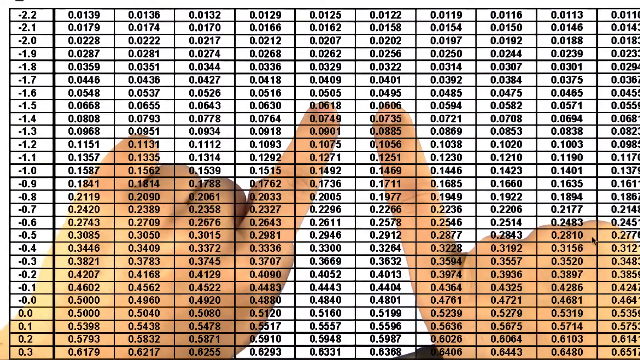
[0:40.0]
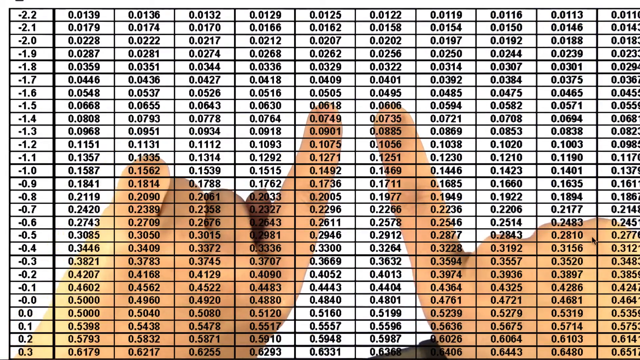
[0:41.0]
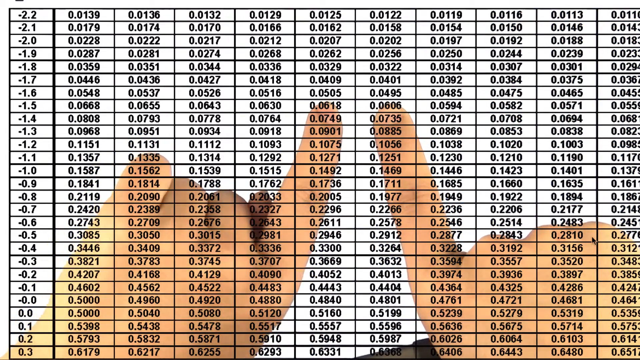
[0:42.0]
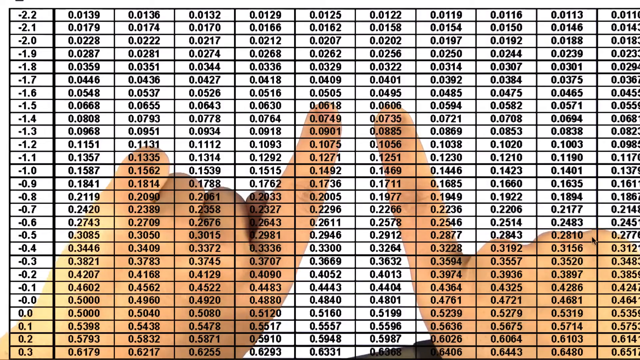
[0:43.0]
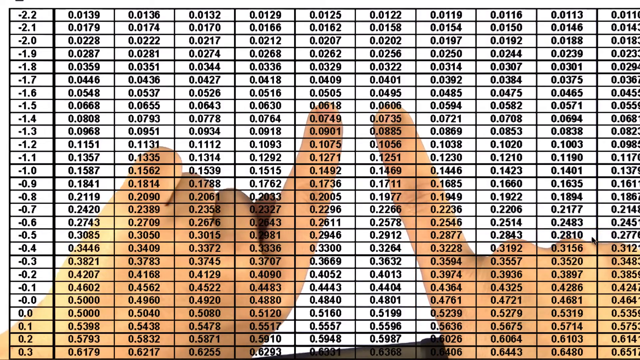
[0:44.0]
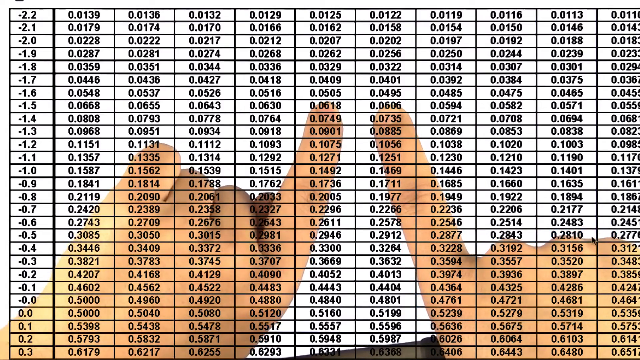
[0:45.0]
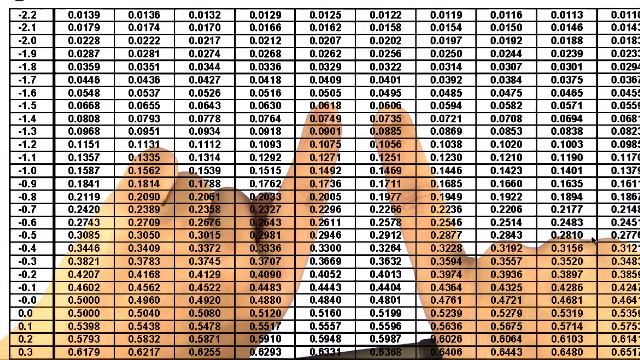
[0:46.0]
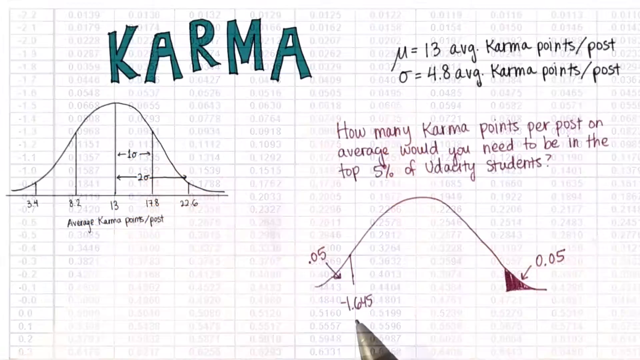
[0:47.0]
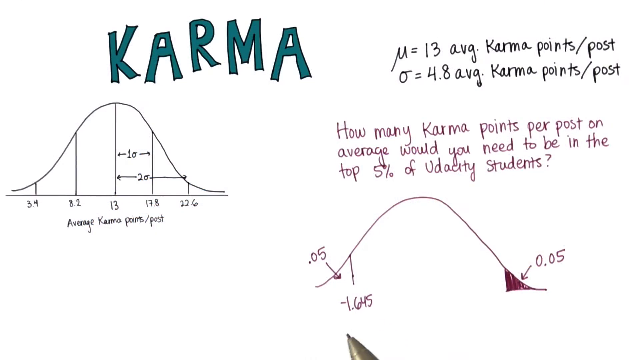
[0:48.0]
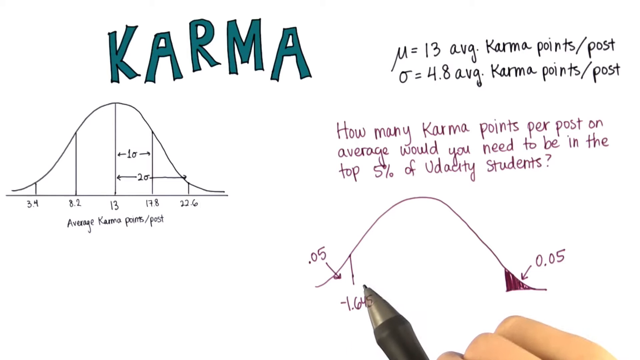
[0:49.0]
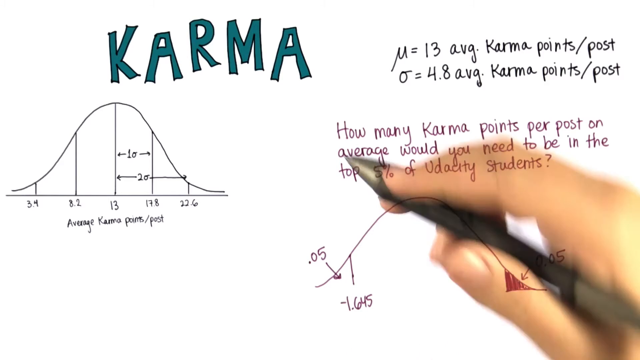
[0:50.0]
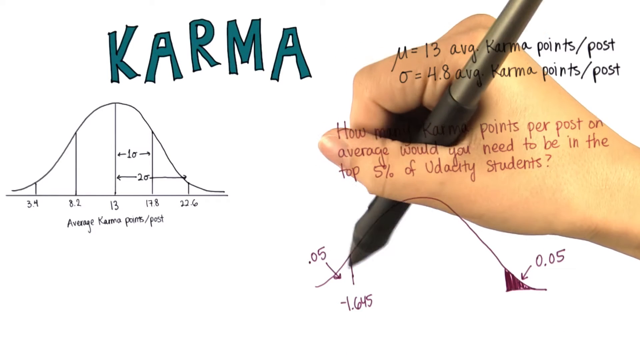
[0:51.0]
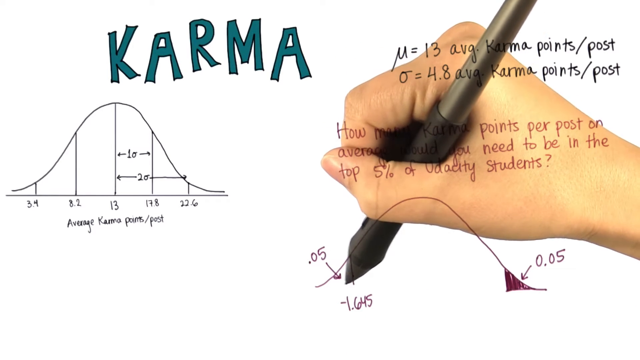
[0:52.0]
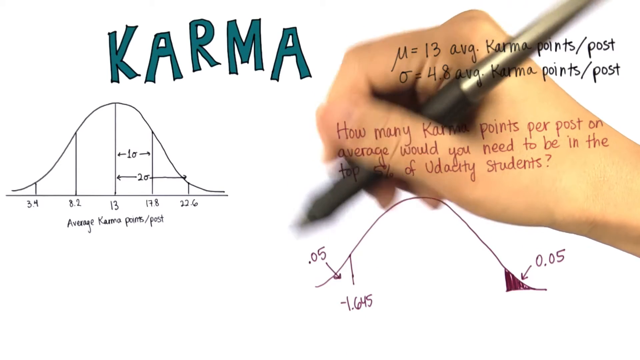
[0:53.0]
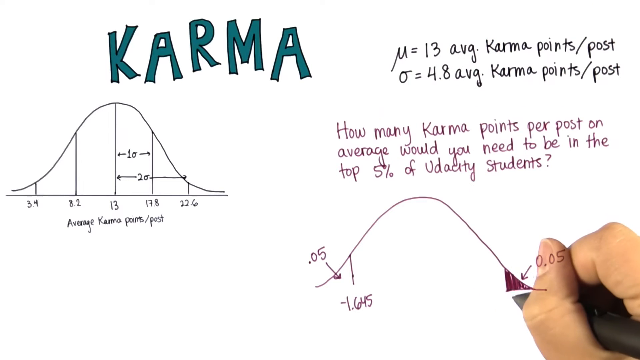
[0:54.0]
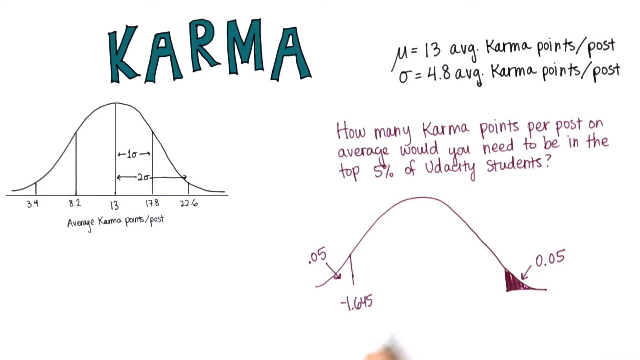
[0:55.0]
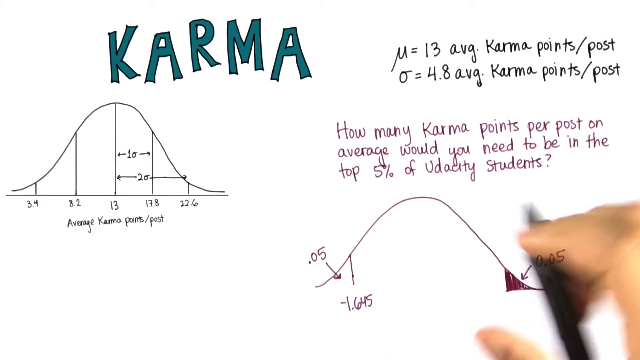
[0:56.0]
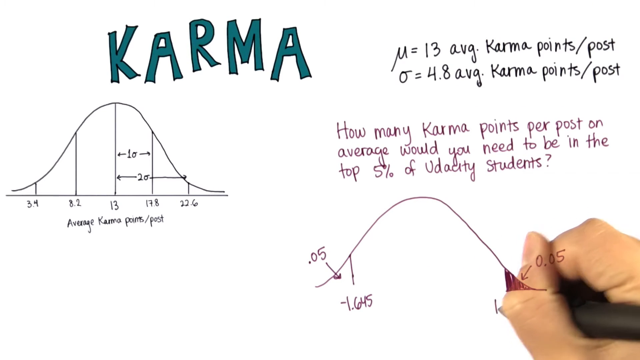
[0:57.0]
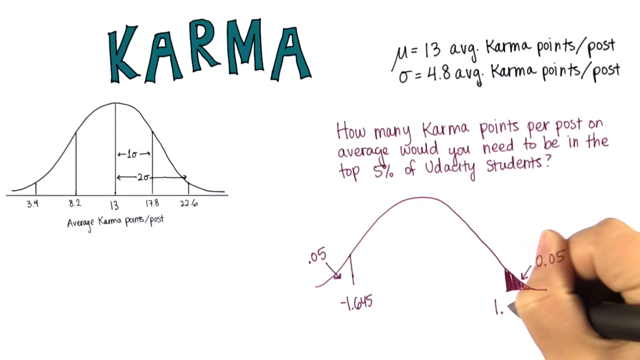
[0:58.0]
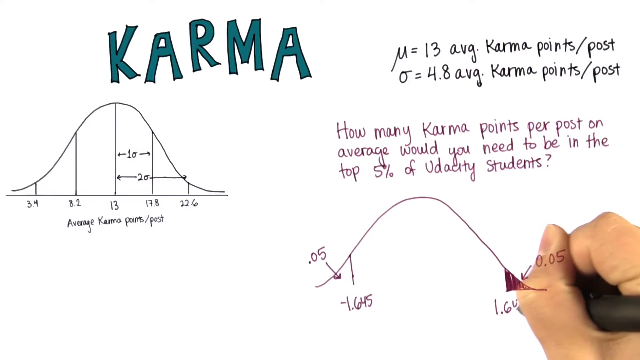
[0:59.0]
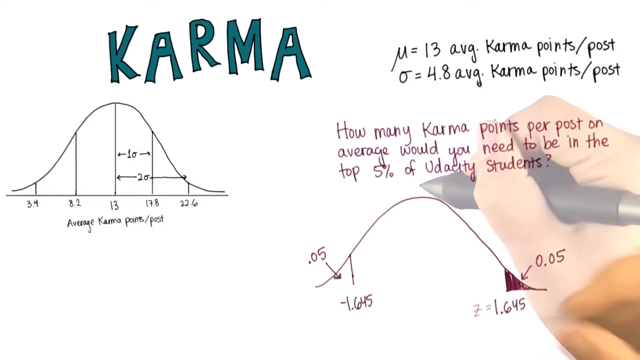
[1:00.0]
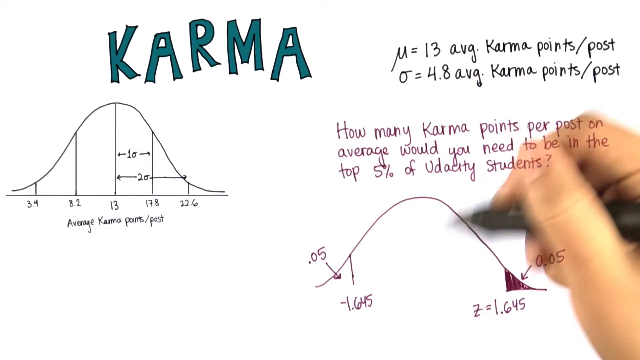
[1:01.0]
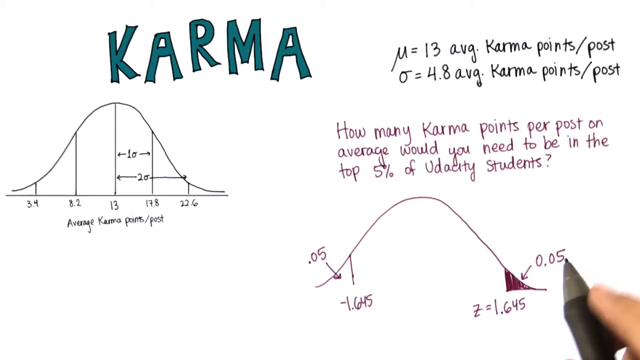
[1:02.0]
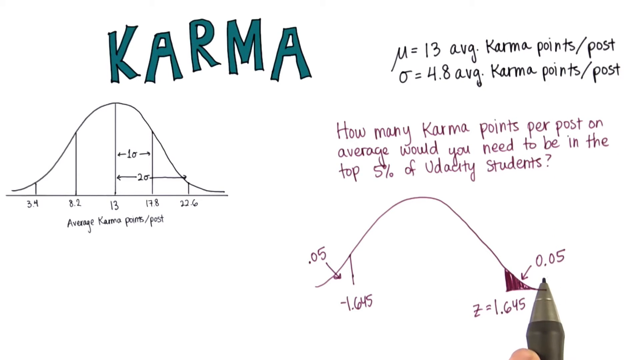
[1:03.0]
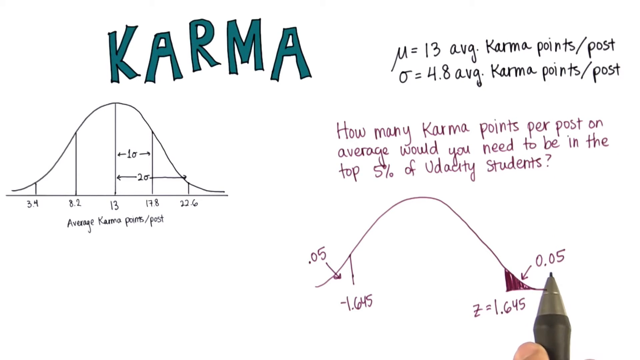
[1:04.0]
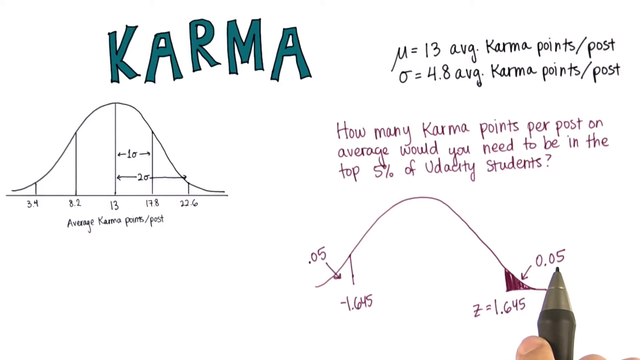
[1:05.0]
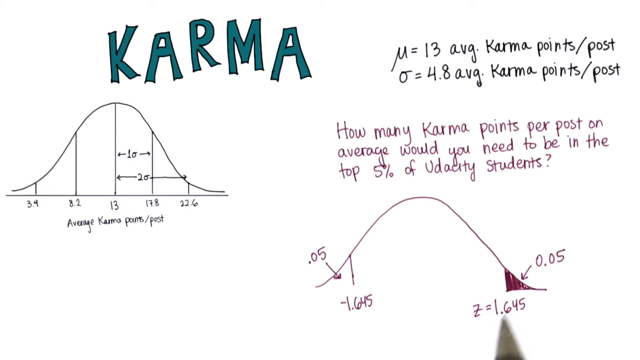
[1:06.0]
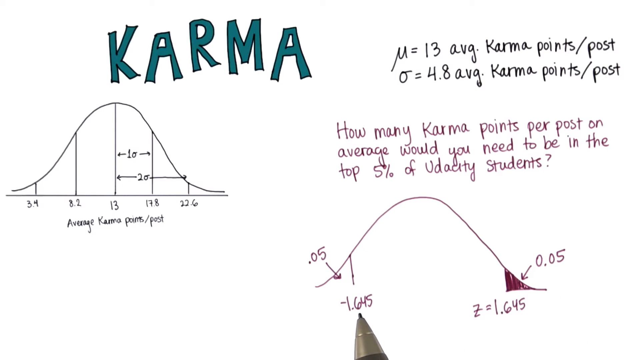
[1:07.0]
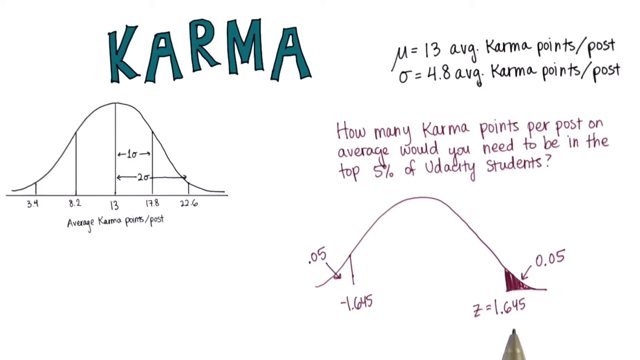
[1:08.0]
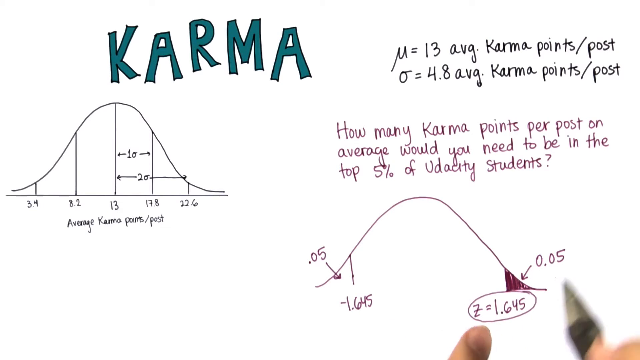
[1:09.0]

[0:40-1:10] The man shows a table with many numbers in it, for example from minus 2.2 to 0.2, with numbers going from 0.0139 to 0.614. He points both index fingers, from his left and right hands, at the middle. Next, another screen titled "karma" appears, showing average karma per post from 3.4 to 22.6, U equals 13 average karma points per post, and O equals 4.8 average karma points per post, along with the question "how many karma points per post on average would you need to be in the top 5 of Udacity students." At the bottom left is 0.05, which is minus 1.615, and at the bottom right is 0.05, which is 1.645.